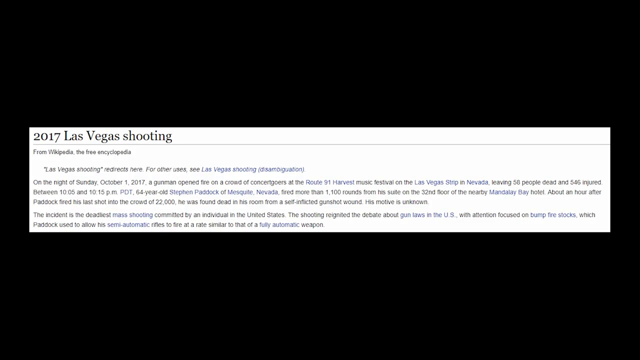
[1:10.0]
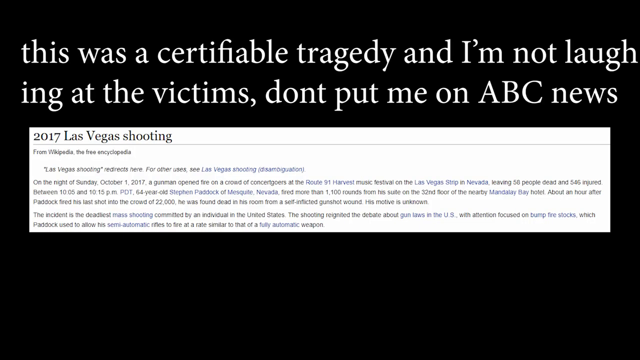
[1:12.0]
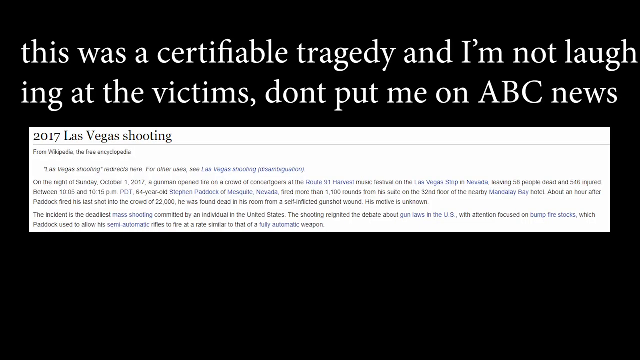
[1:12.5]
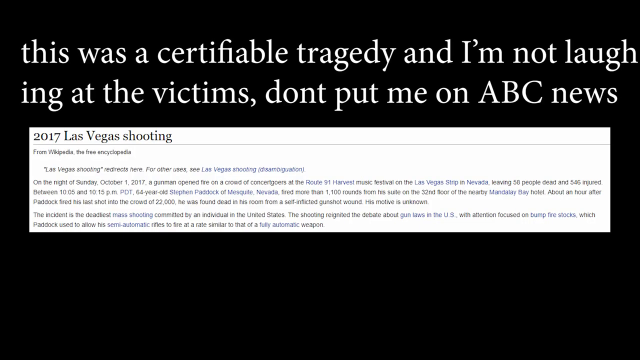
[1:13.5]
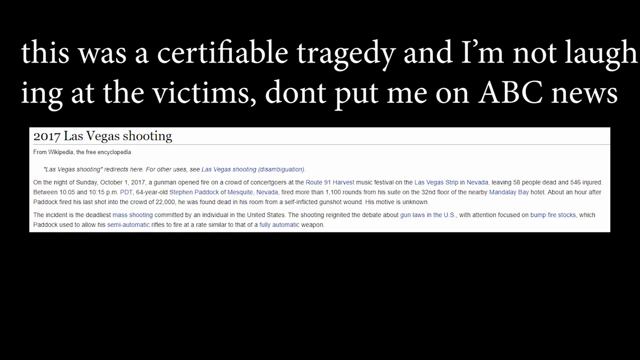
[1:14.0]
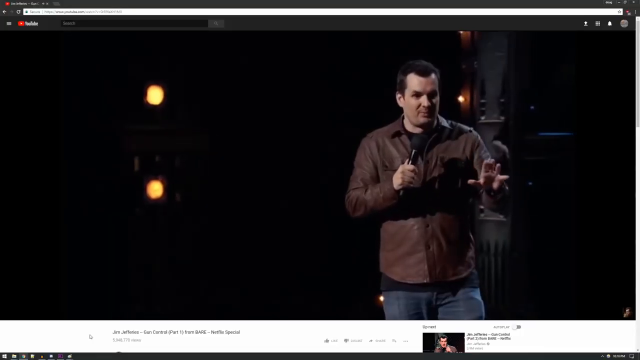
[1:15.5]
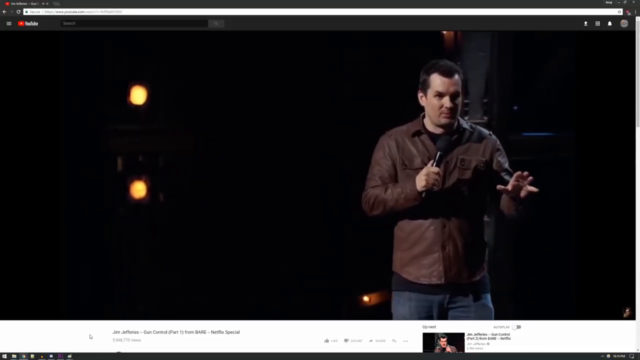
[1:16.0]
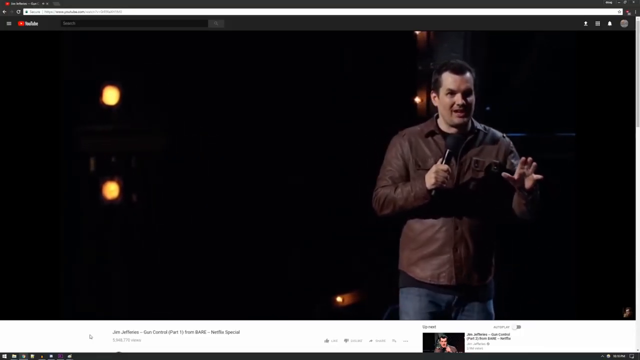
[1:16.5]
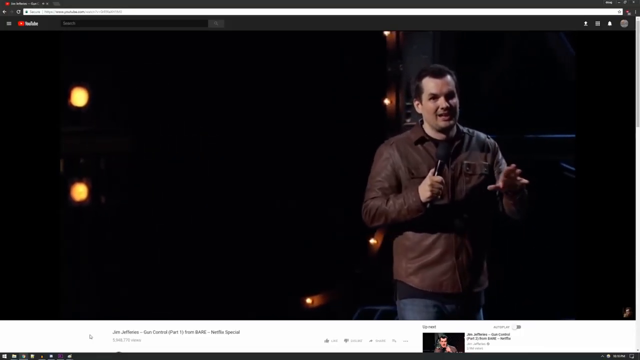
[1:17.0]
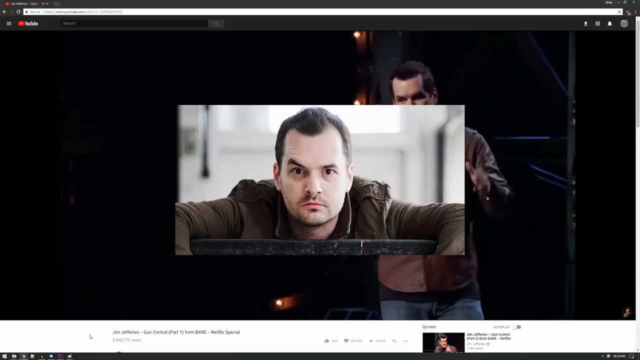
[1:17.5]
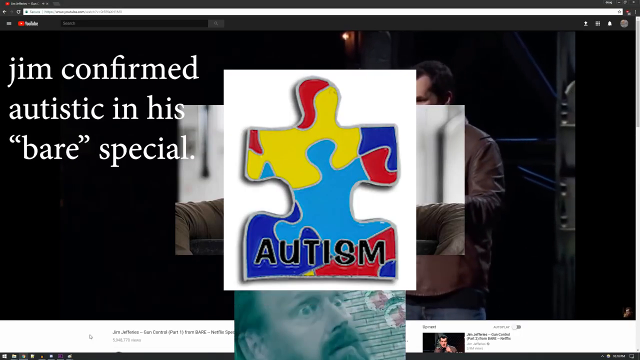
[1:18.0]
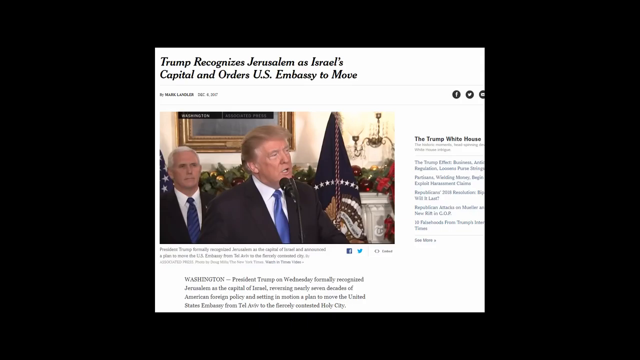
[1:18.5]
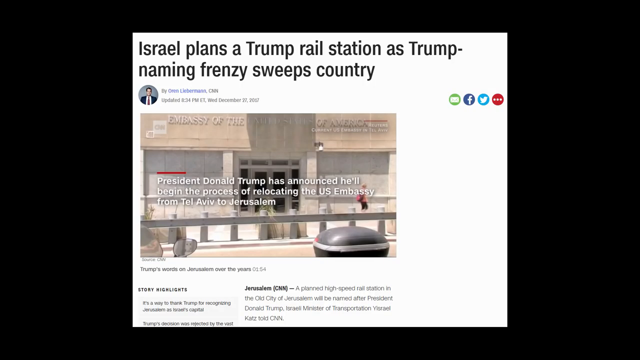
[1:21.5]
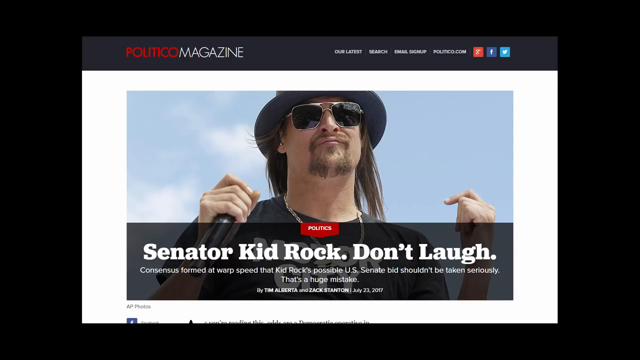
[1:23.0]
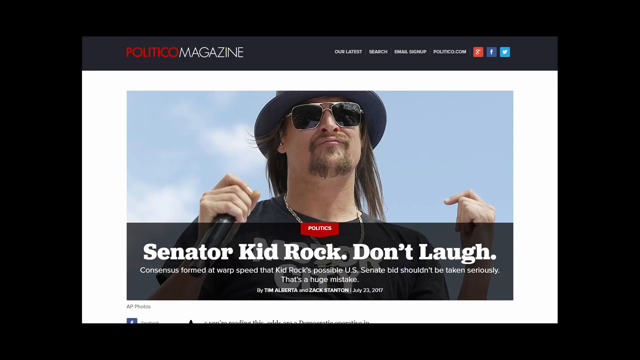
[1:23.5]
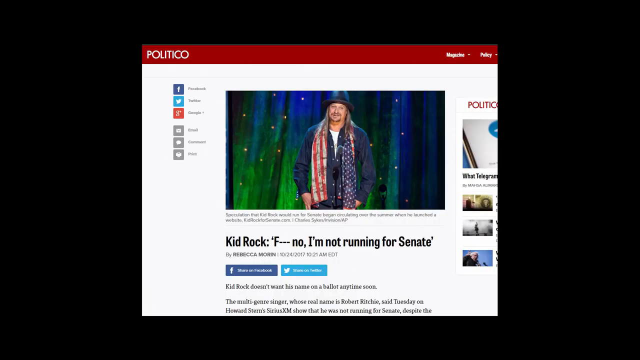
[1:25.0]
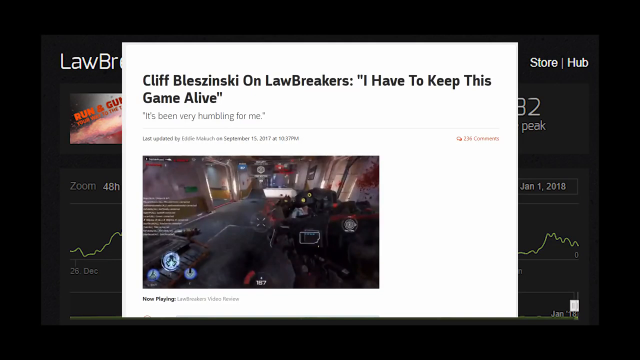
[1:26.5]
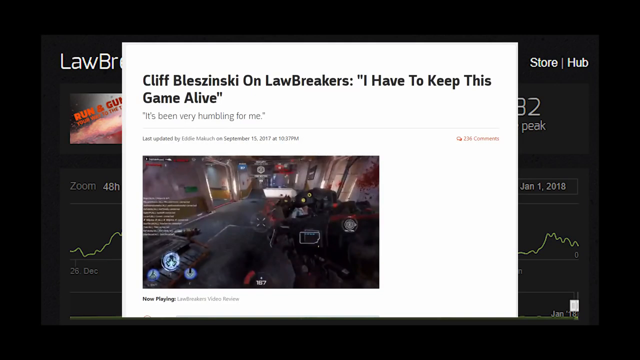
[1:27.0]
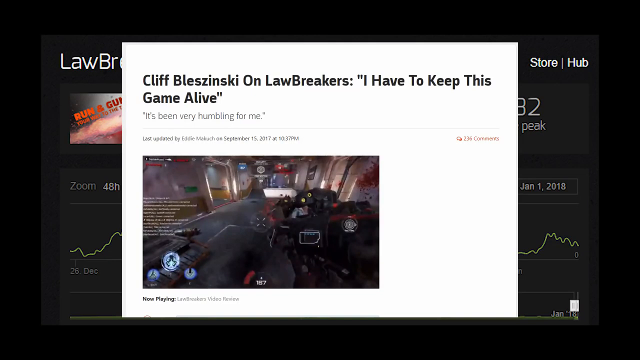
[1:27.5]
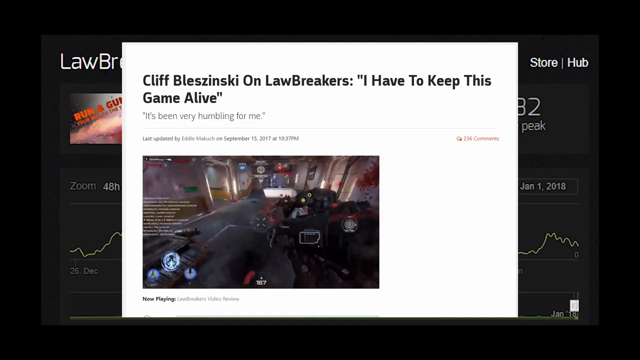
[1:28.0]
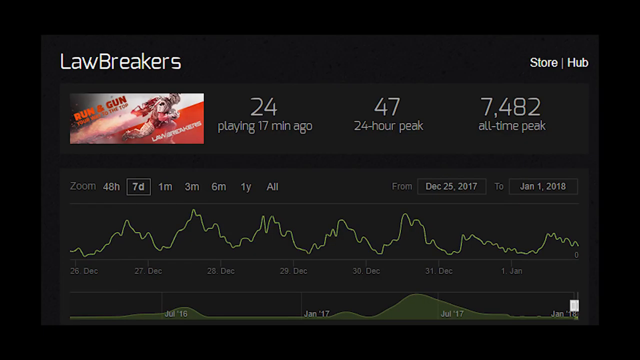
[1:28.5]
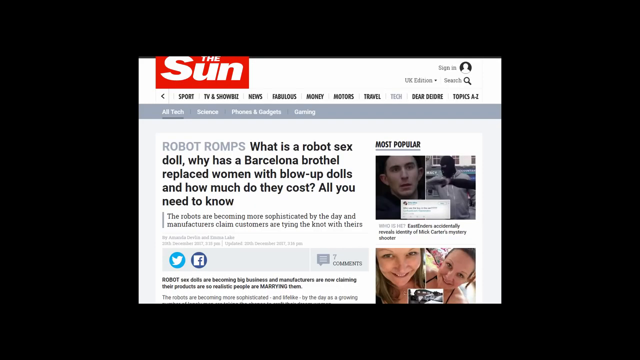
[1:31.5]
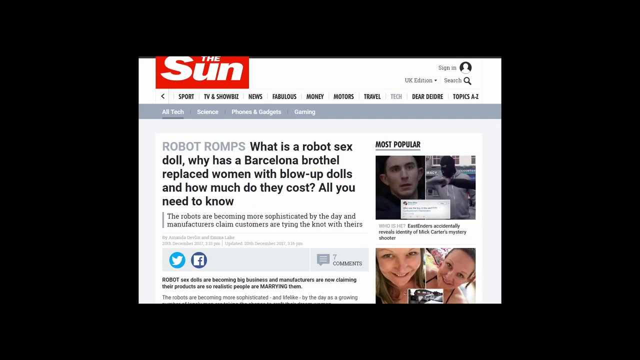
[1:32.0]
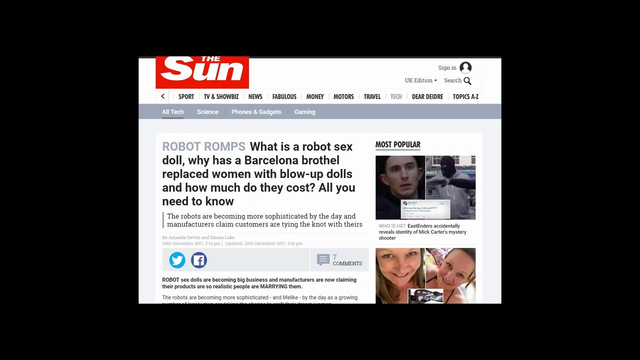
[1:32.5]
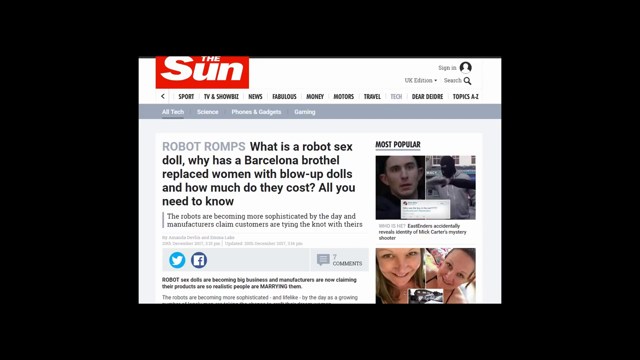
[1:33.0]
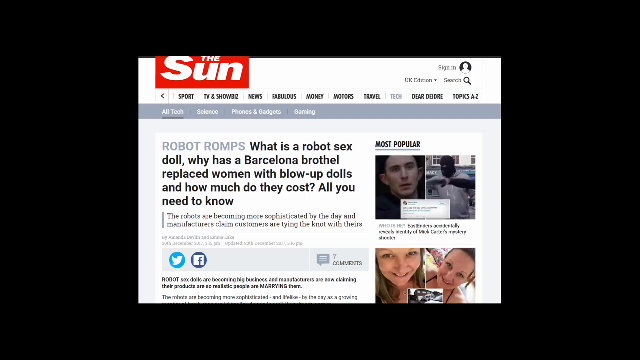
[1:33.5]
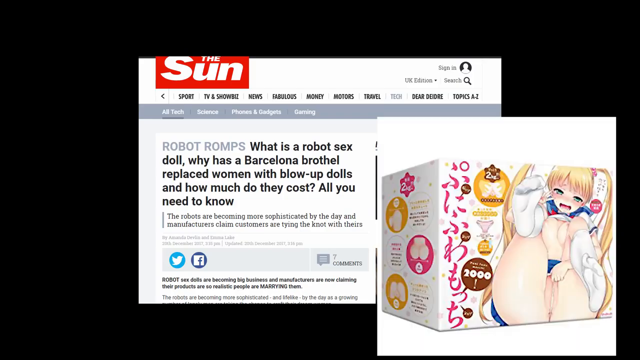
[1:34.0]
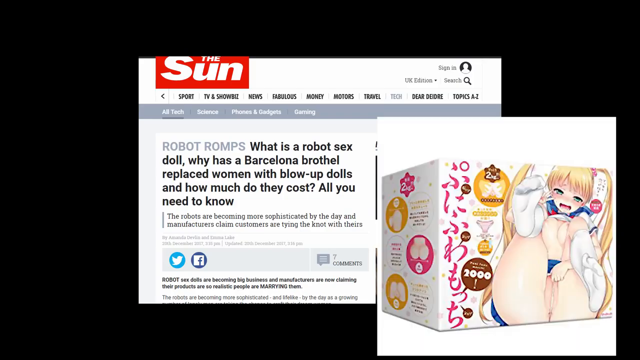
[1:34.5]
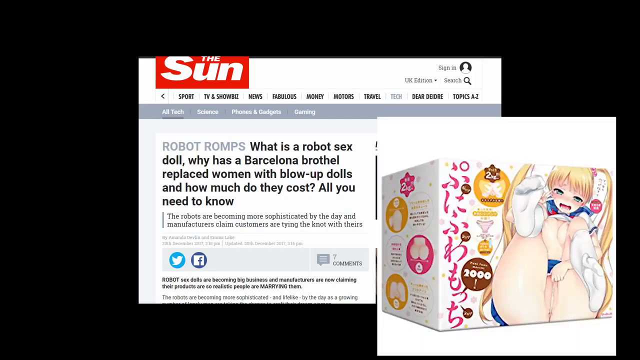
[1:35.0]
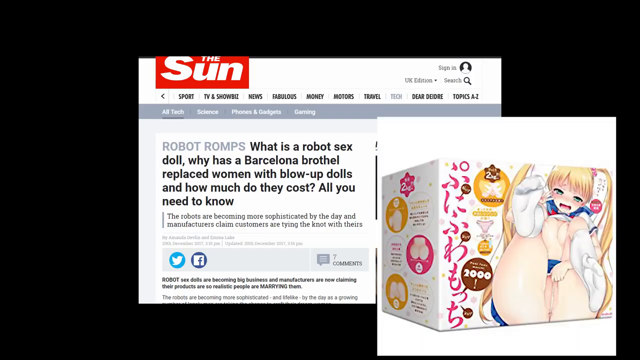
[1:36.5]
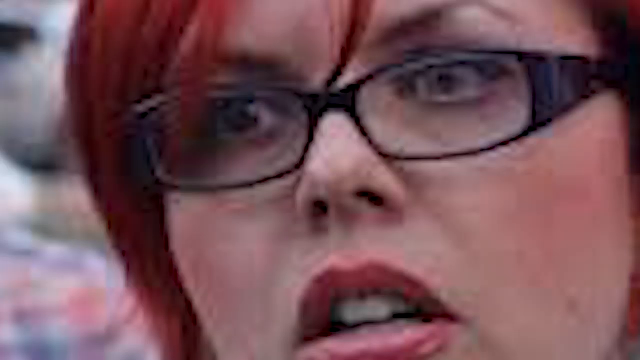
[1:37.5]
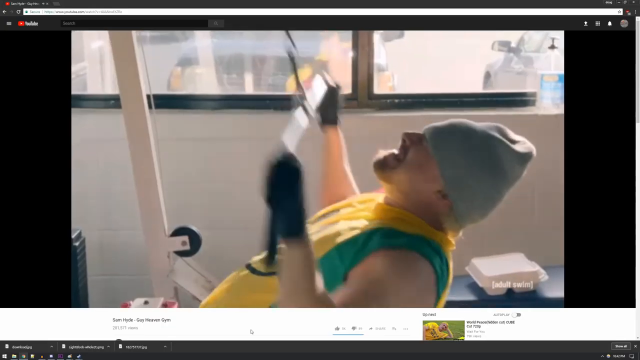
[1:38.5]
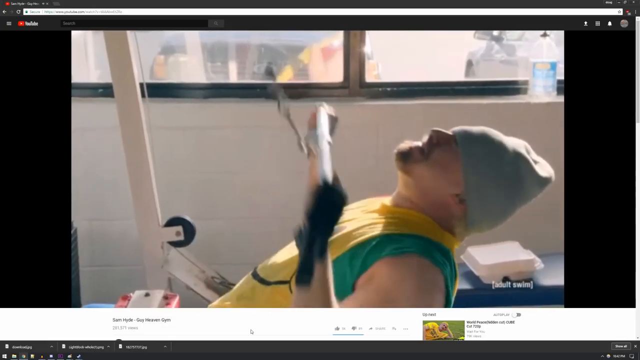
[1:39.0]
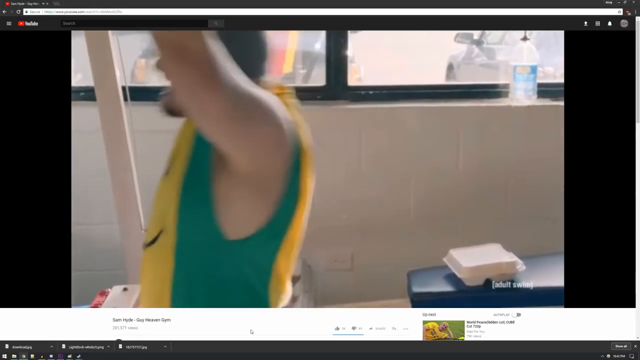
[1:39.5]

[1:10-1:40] An article about the 2017 Las Vegas shooting is shown, highlighting text that includes "I'm not laughing at the victims. Don't put me on ABC News." A white man in a brown top is on stage at a show, and there is something about autism on screen, along with a multicolored puzzle piece. A pop-up for Senator Kid Rock appears, and many different pop-ups make up the sequence. Articles from The Sun about a Barcelona hotel appear. A pop-up shows a girl with different colored hair, apparently pink. The Las Vegas shooting article returns. Everything pops up so quickly that it is hard to read; the readable items include articles on Trump, Kid Rock and Jerusalem, a LawBreakers pop-up with a graph, and an article from The Sun.